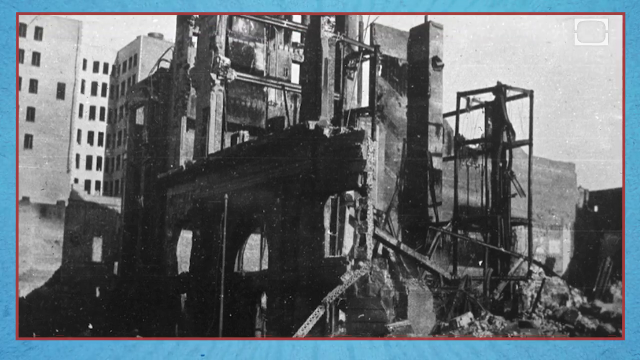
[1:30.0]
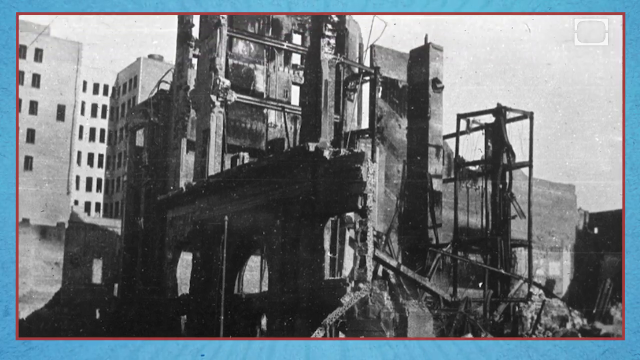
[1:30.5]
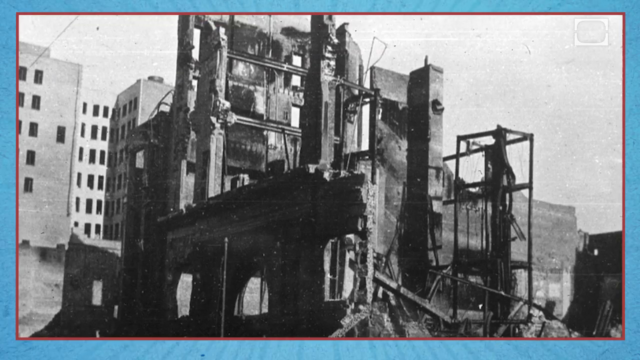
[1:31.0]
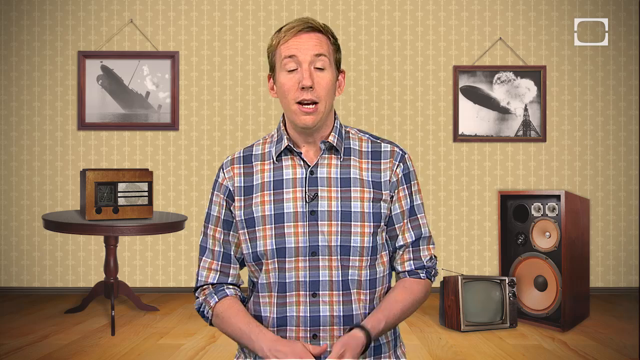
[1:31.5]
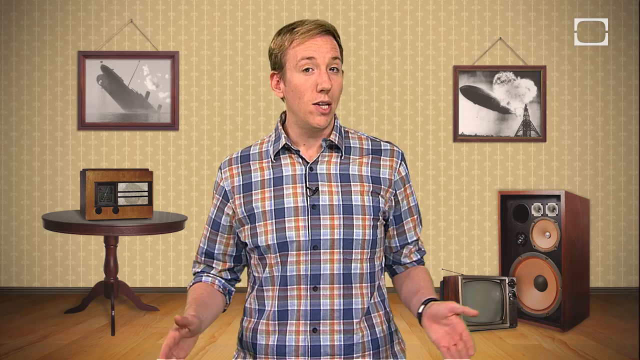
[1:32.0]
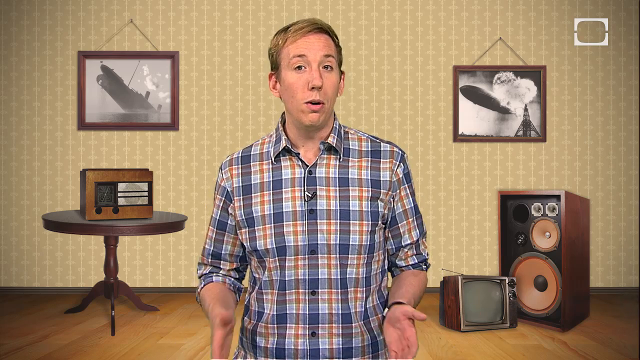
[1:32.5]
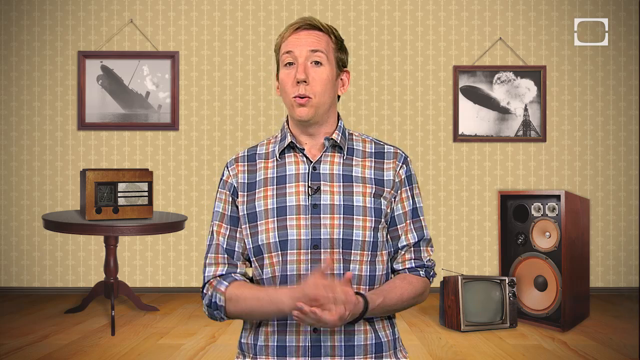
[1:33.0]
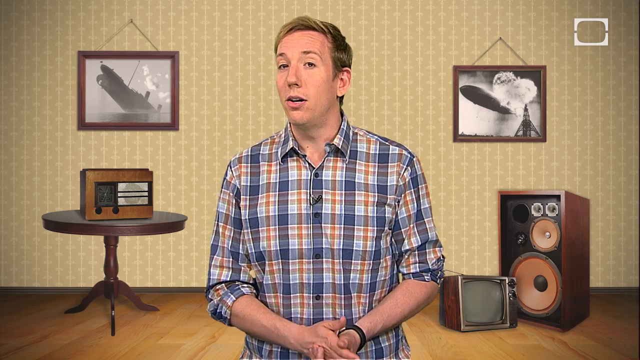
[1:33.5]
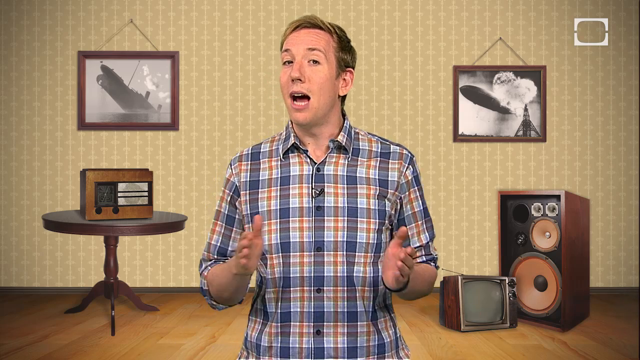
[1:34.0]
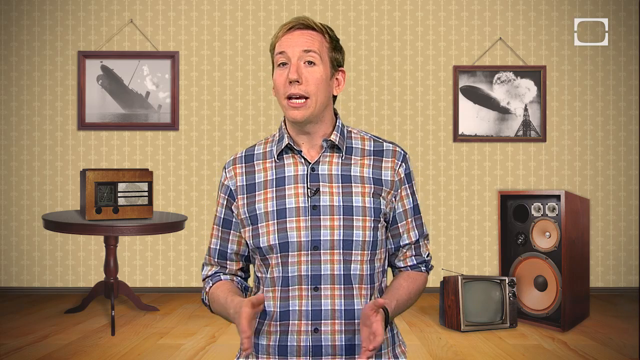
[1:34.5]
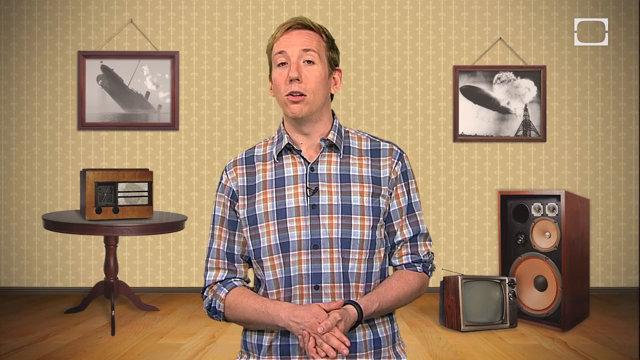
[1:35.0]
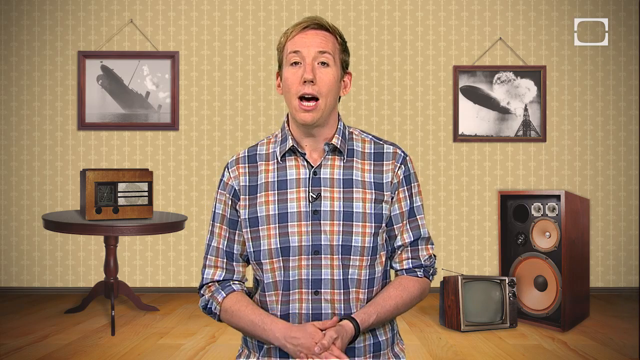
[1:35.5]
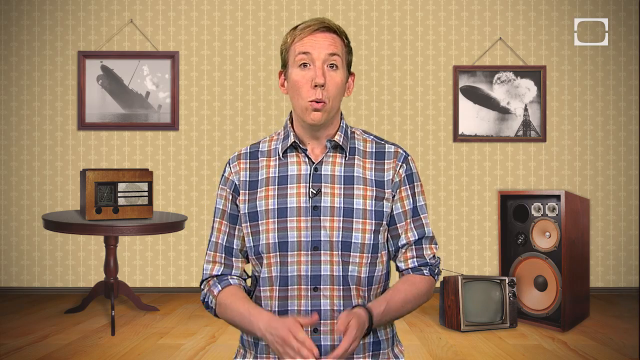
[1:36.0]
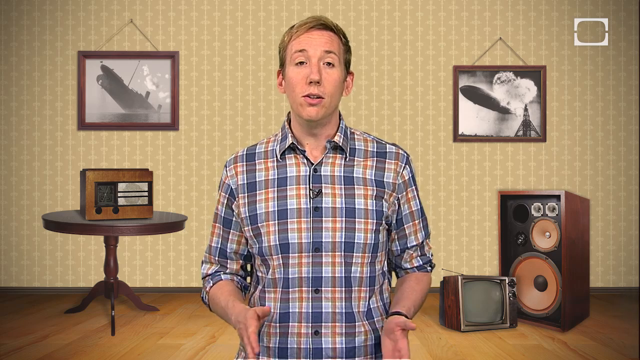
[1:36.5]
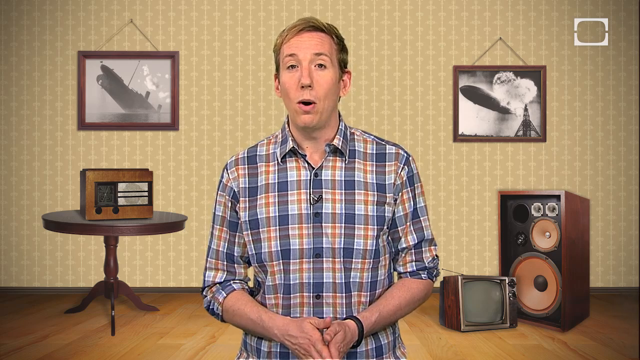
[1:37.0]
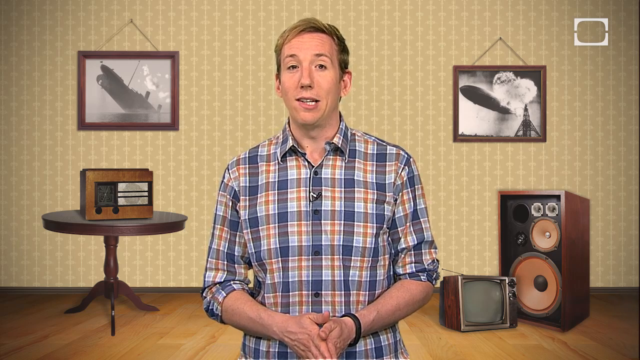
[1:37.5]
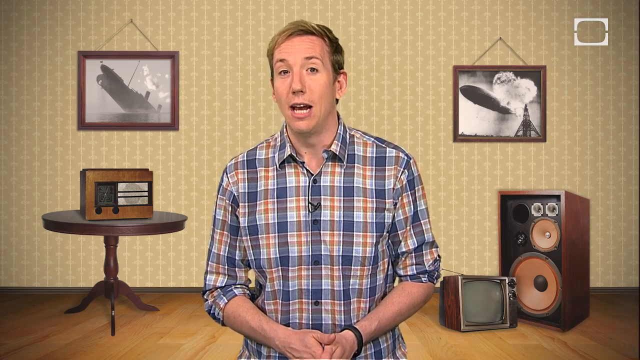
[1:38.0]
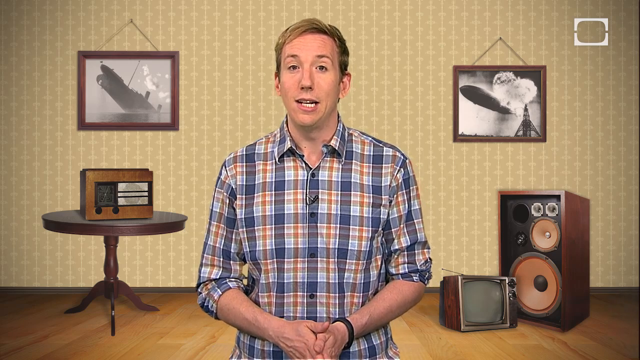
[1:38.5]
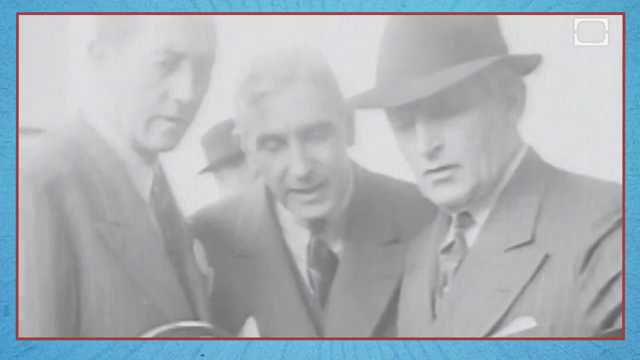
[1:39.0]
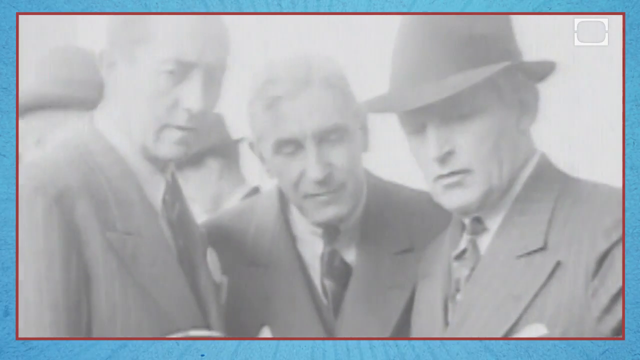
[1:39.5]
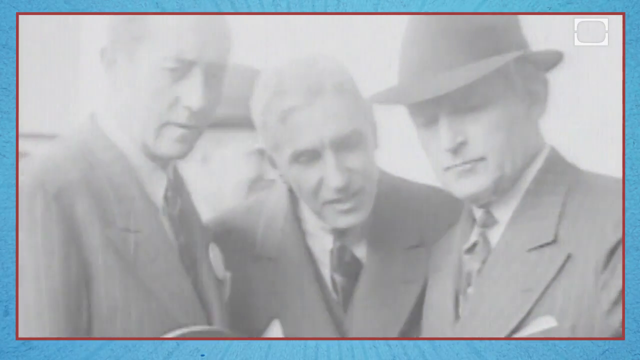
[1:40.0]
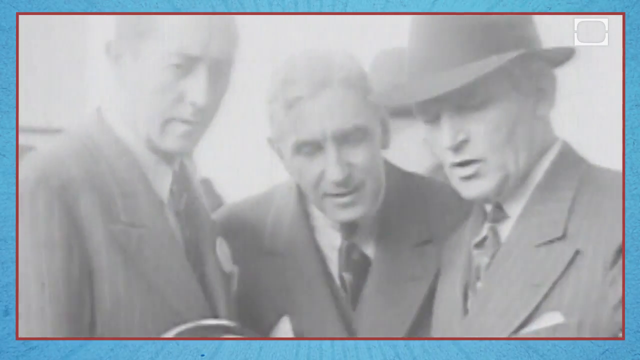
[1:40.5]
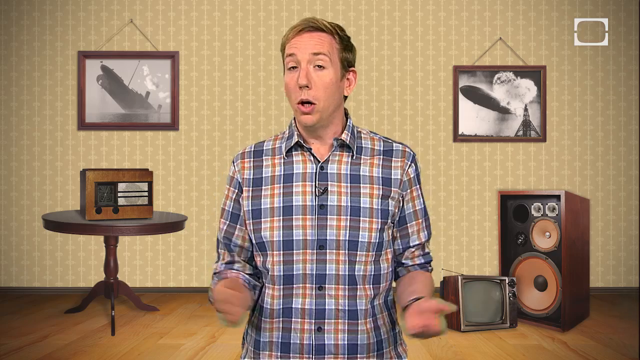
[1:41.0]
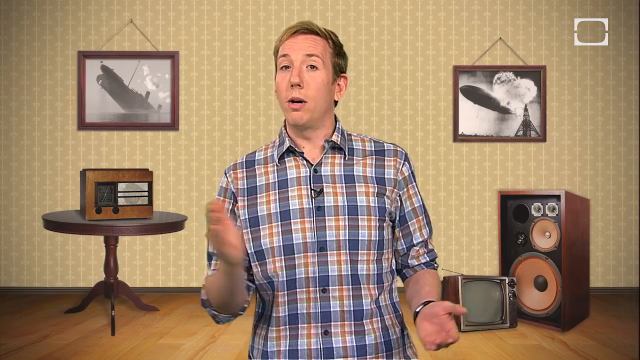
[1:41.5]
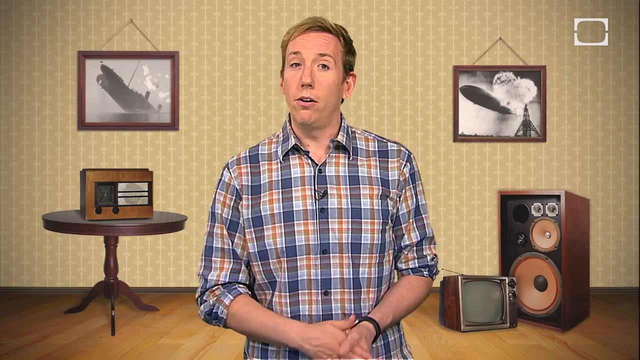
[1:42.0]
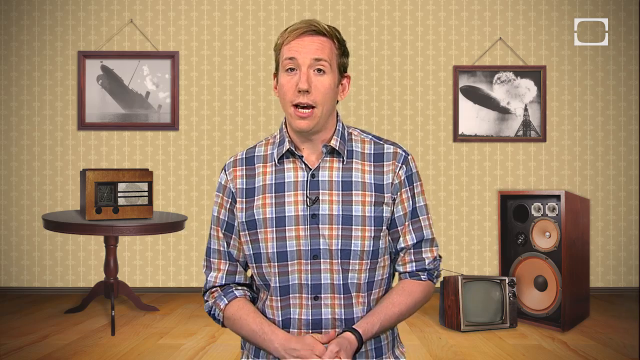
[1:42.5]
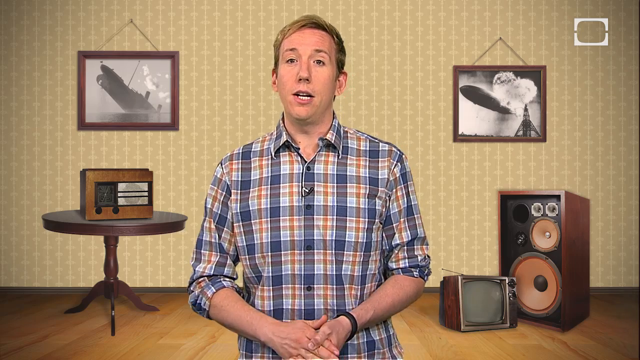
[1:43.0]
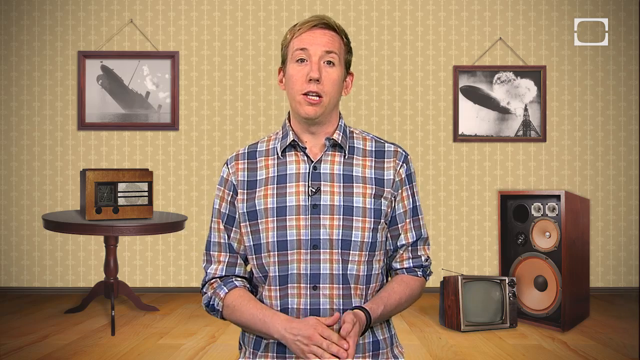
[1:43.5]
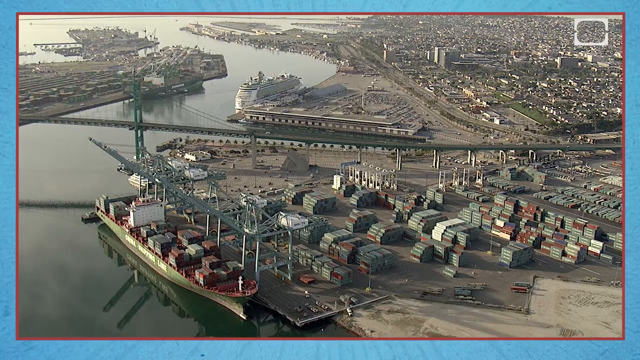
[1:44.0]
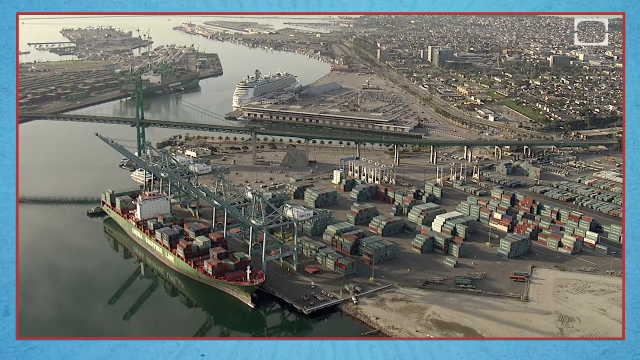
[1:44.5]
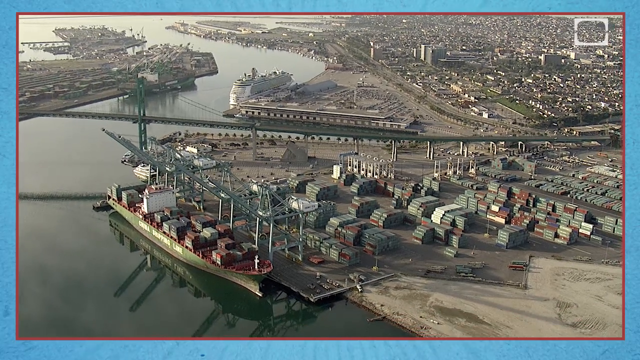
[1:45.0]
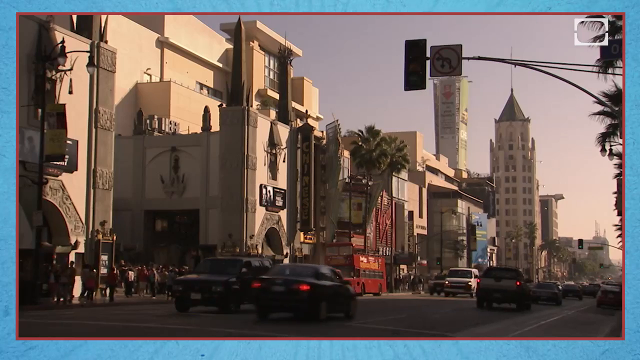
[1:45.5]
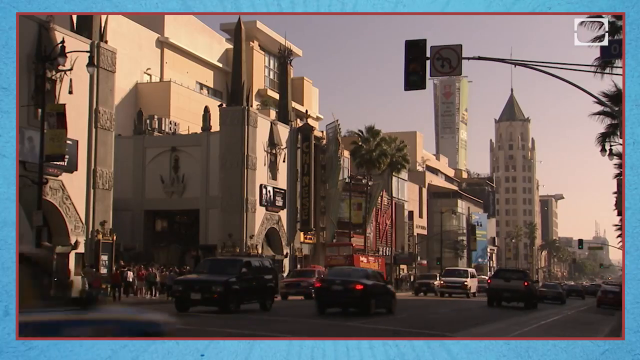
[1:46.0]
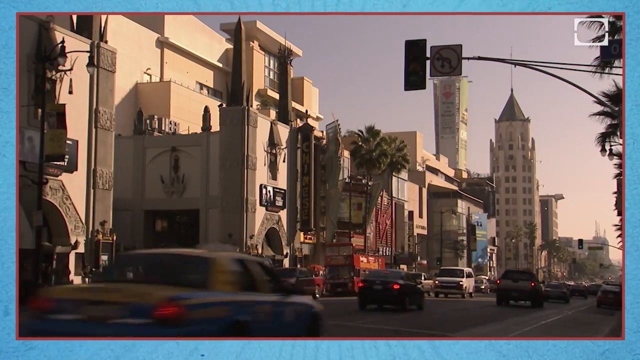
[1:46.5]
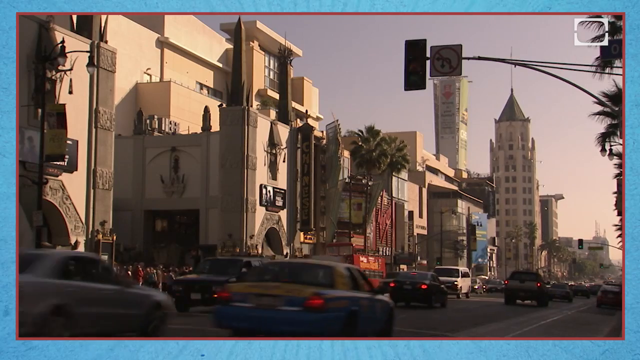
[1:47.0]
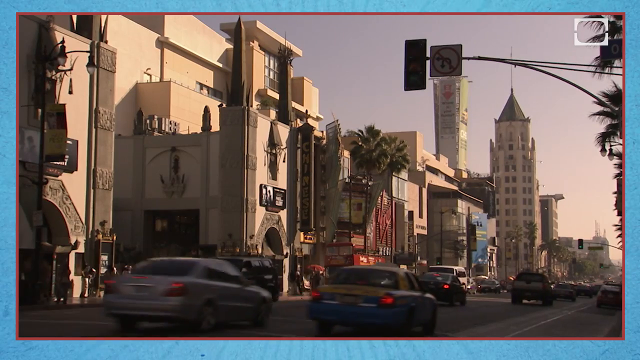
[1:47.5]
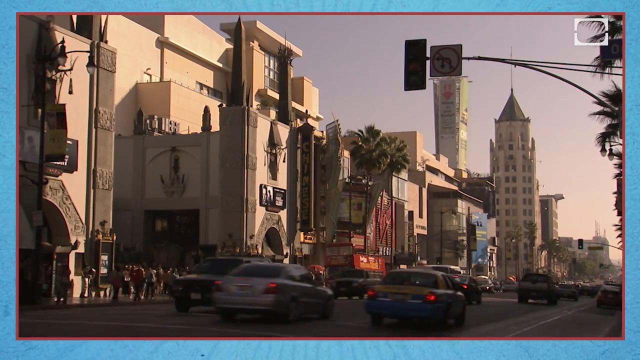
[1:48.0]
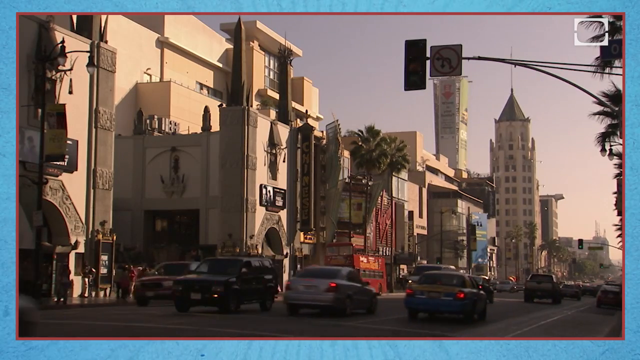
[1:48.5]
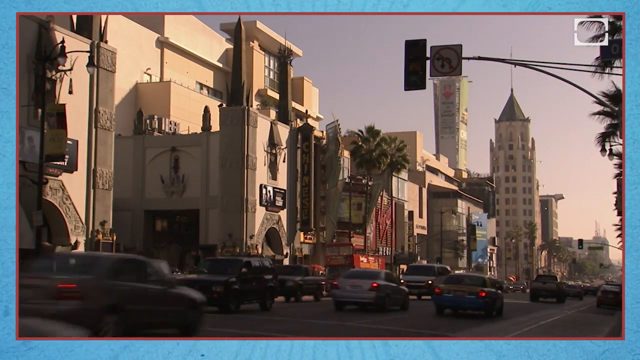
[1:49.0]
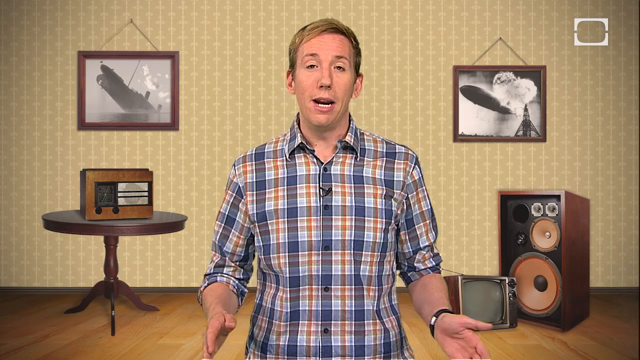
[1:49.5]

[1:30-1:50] A black and white image shows a really tall, somewhat ruined building that is basically just the building blocks of a building rather than the actual building itself, with a cloudy sky. Scott then appears again, talking at the viewer. Next, brief black and white footage shows three men talking with each other; they are dressed pretty much the same, all wearing vests of an indiscernible color, and look like professional businessmen. Scott appears again, followed by more footage of people driving in town.